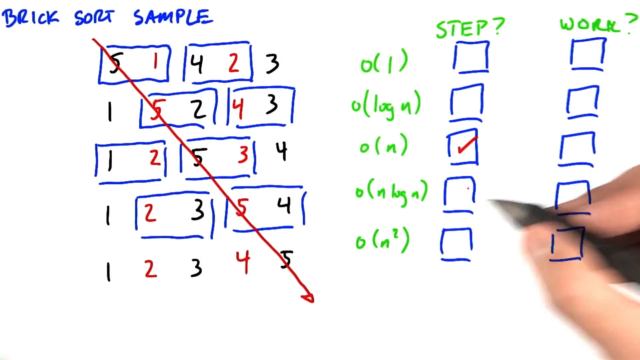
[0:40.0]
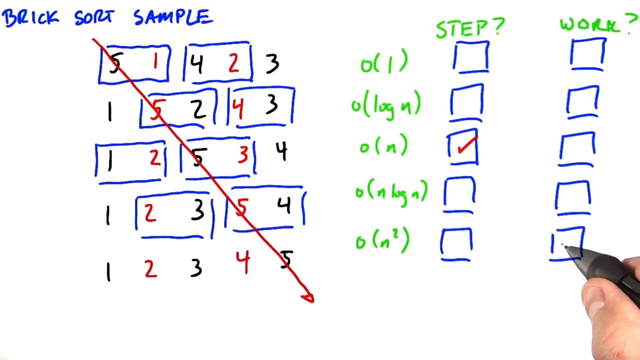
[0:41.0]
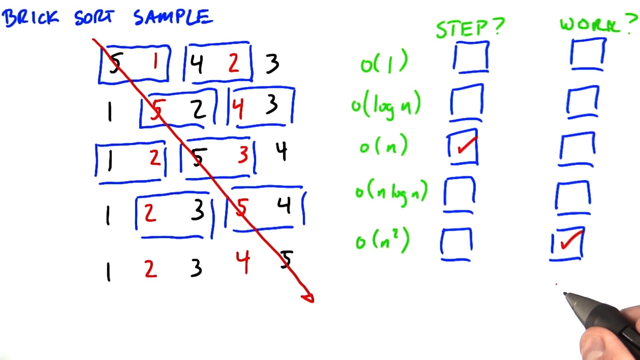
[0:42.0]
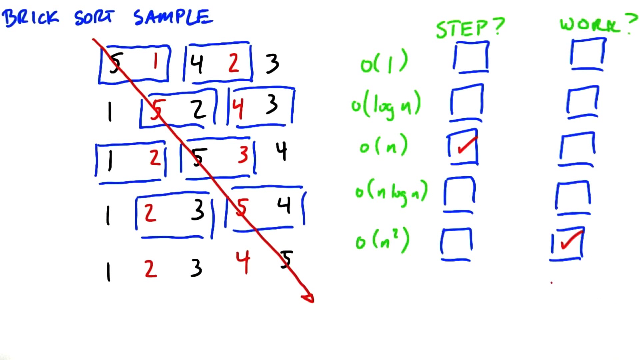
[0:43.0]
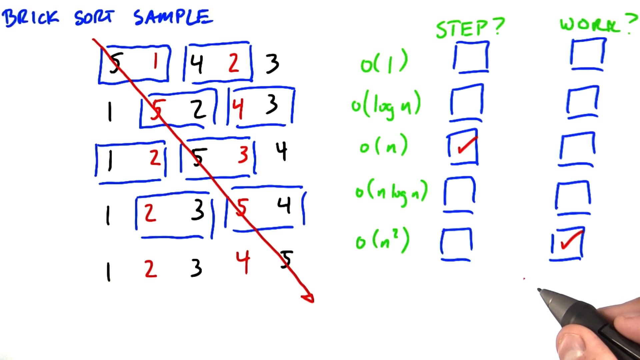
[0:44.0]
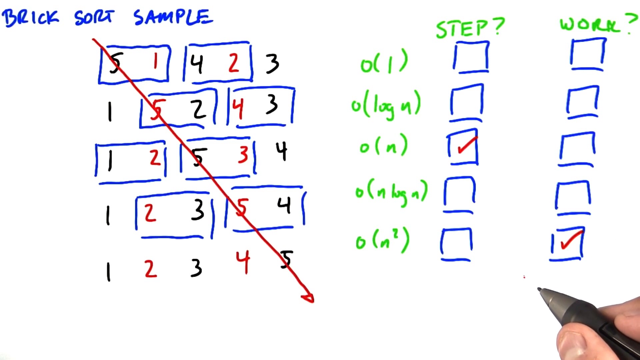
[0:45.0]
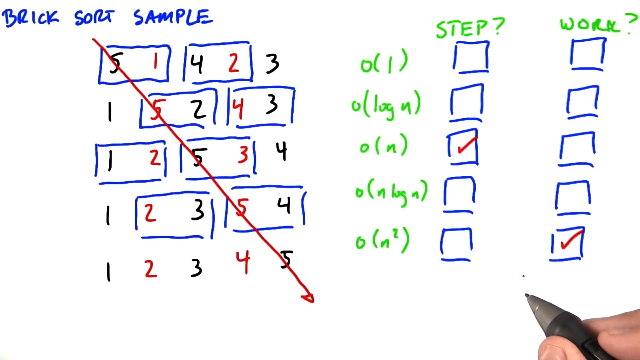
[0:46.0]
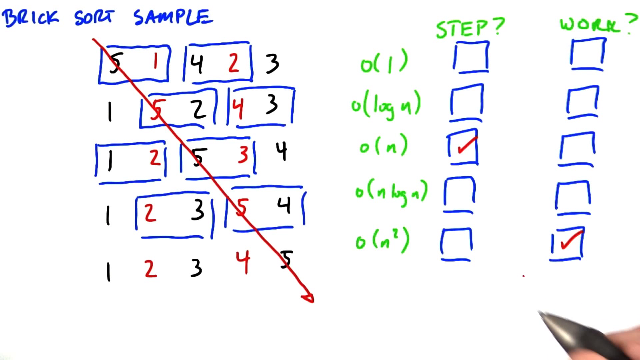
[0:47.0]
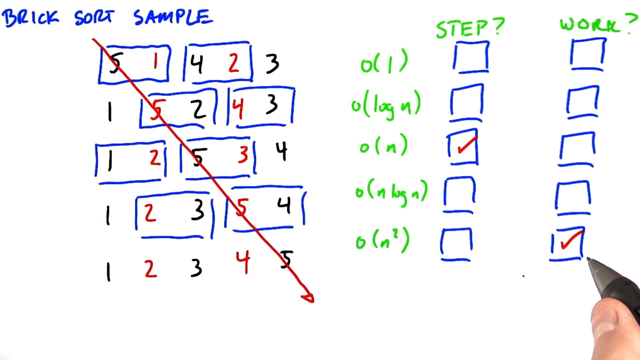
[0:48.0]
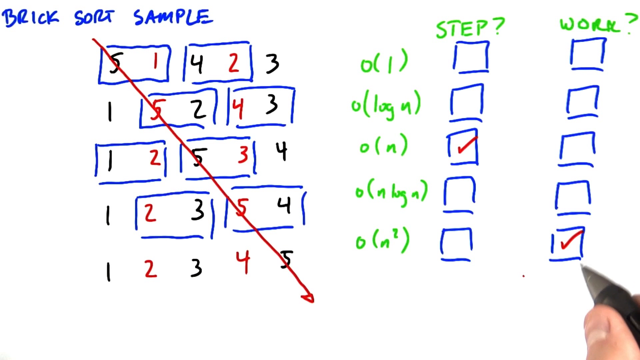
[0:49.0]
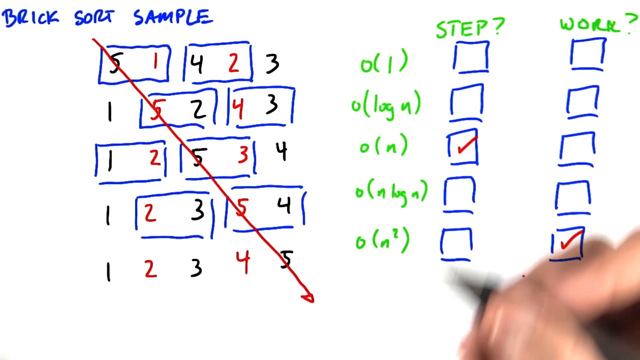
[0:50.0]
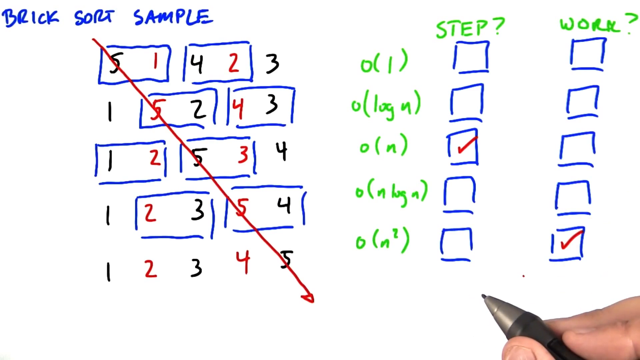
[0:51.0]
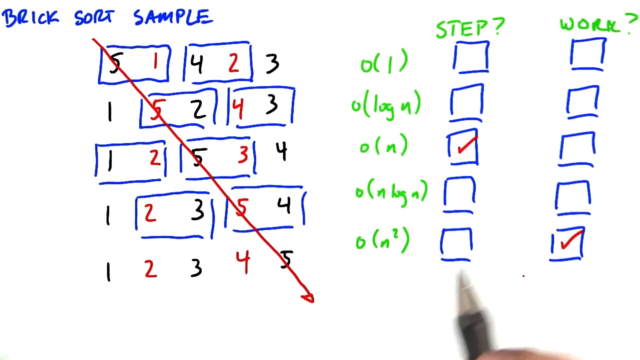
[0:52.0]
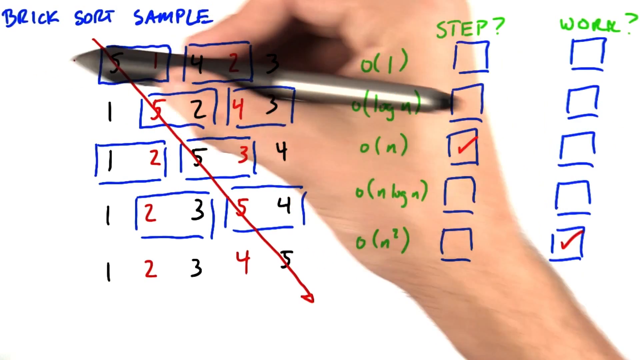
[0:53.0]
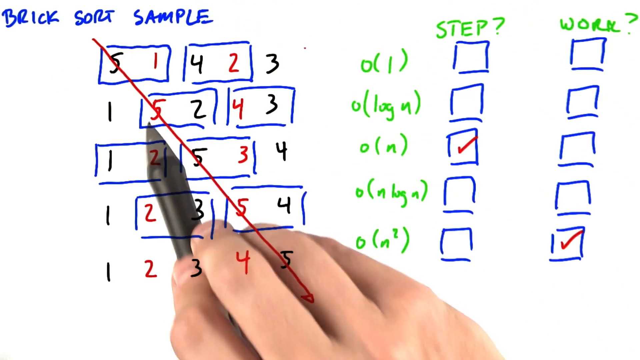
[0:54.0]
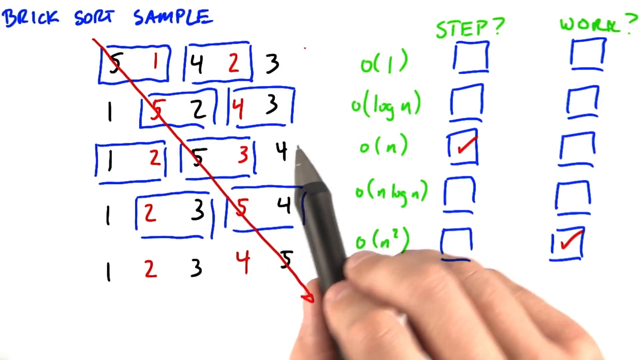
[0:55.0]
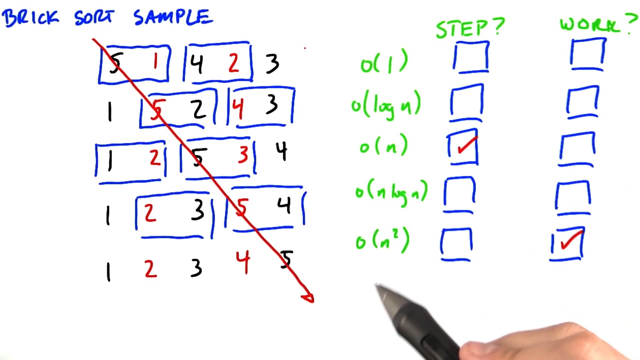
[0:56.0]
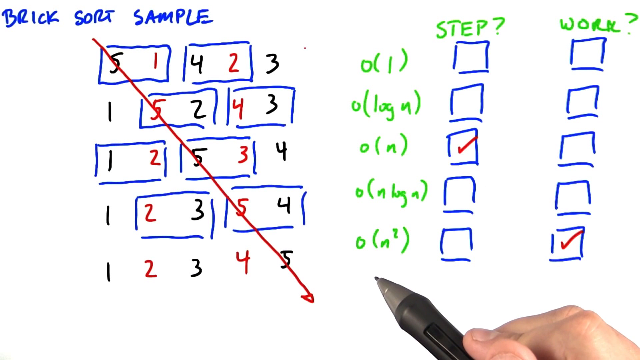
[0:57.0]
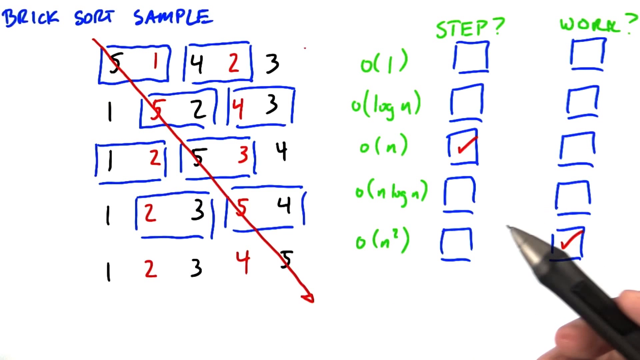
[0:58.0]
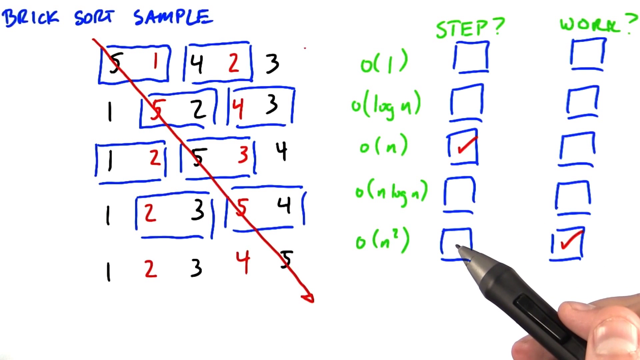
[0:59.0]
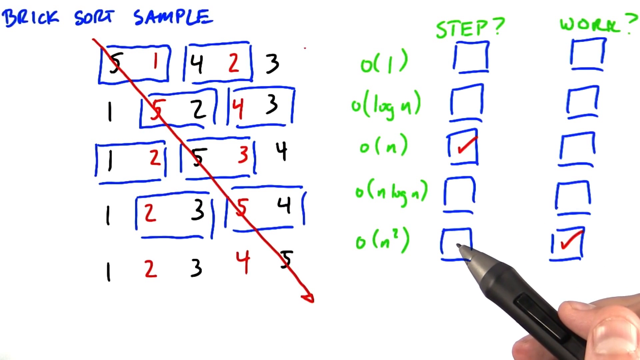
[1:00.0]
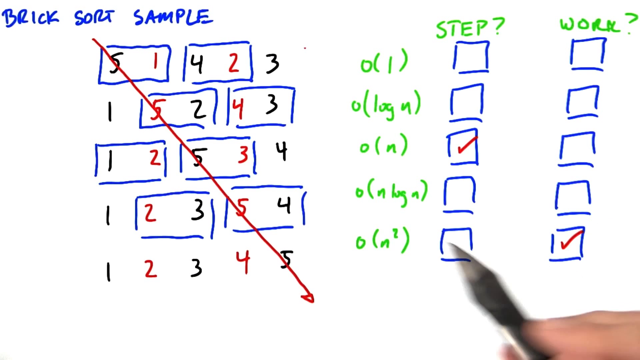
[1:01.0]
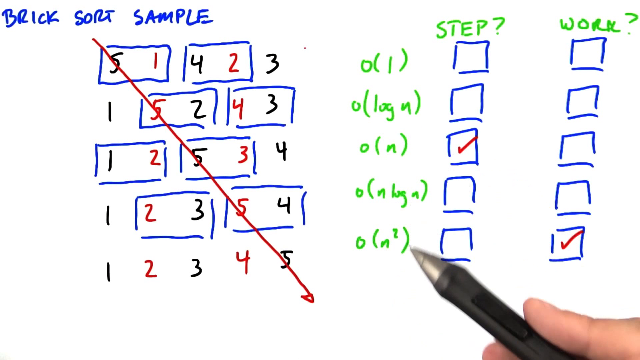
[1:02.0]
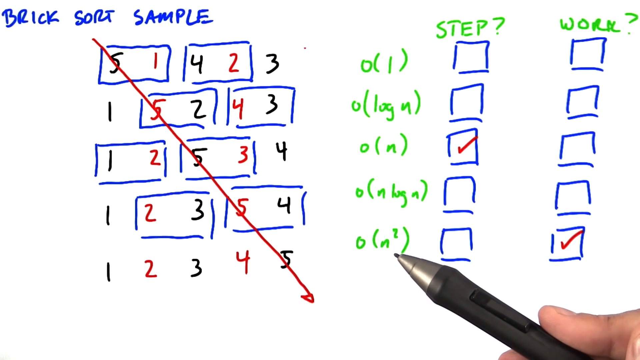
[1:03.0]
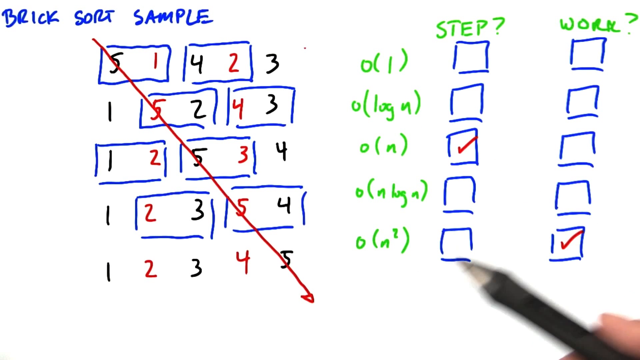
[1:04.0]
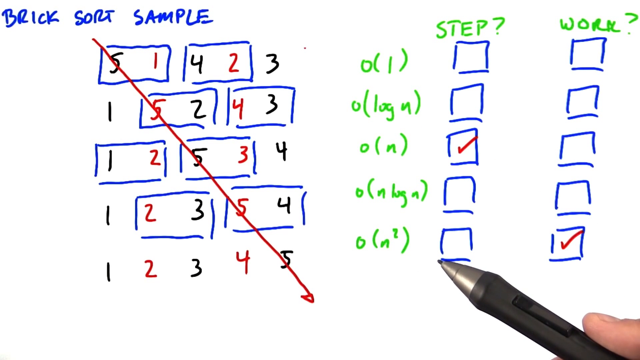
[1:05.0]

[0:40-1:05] The scene is the same: a white background with "brick sort sample" in blue text at the top left. Below it are numbers, five rows down and five wide, some of them paired inside blue rectangles. In the top row, 5 and 1 and 4 and 2 are each paired in a blue rectangular box, while the number 3 is separate, and this pattern continues in each row. The second row's boxes hold 5 and 2, and 4 and 3; the third row's hold 1 and 2, and 5 and 3; the fourth row's hold 2 and 3, and 5 and 4. The last row has no blue rectangles. At the bottom right, a white-skinned hand holds a black pen, with the thumb, pointer finger and middle finger behind the pen. On the right side are 10 blue squares. Above the far right column is "work?" in green, and to the left of that, above the other five blue squares, is "step?". The person draws a red check mark in the bottom right square, the fifth box below "work?". The hand then kind of rests at the bottom right, making little dots, and readjusts before hovering over the first row of the brick sort sample at the top left. It kind of writes horizontally across that row without drawing anything, then taps the second-row numbers one by one. Finally it hovers over the fifth step box, again without drawing anything.